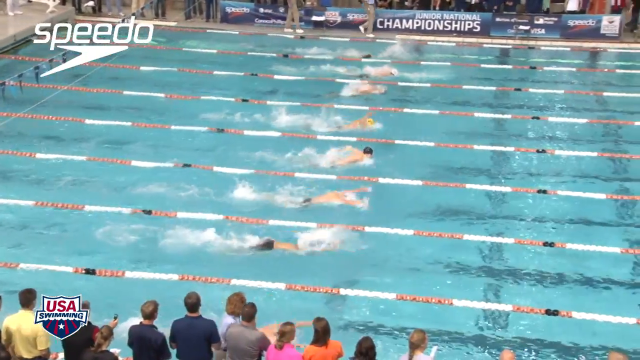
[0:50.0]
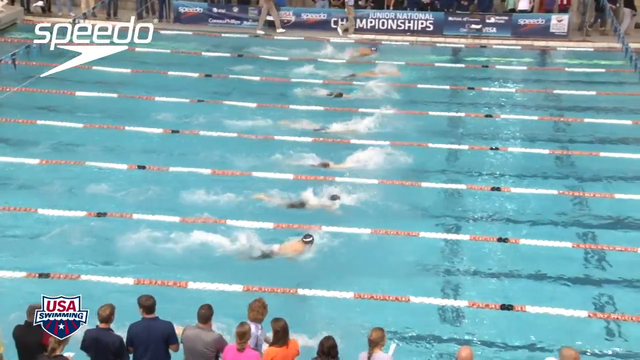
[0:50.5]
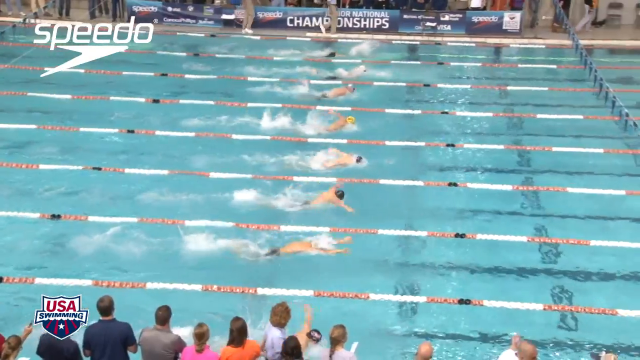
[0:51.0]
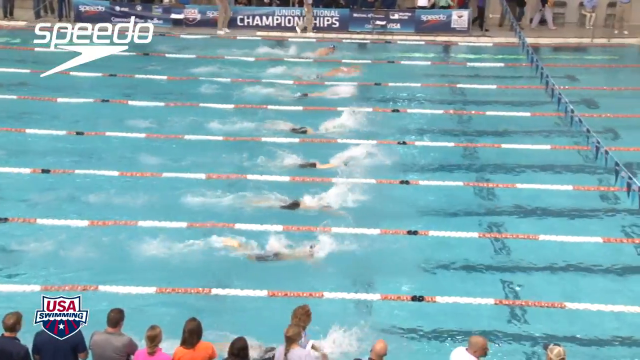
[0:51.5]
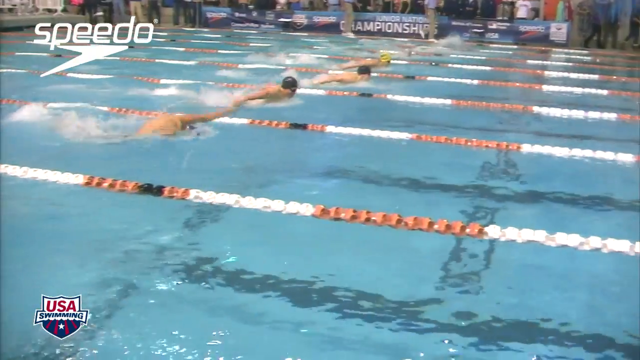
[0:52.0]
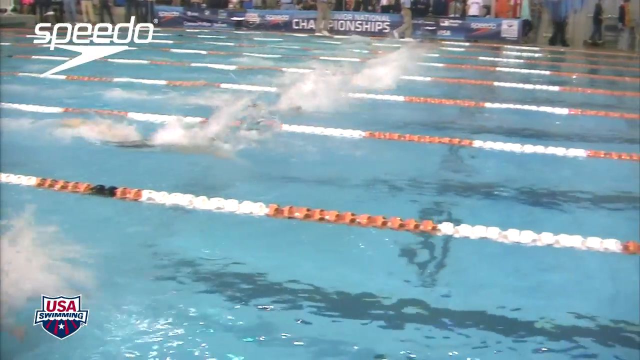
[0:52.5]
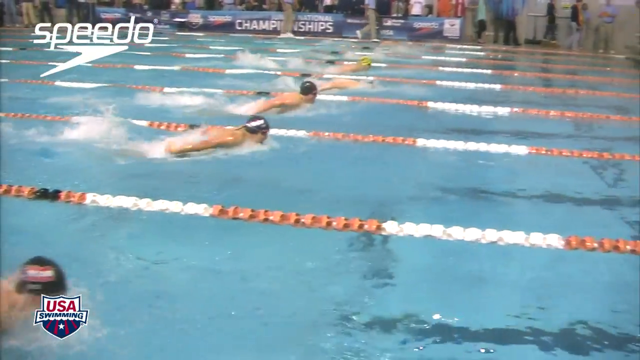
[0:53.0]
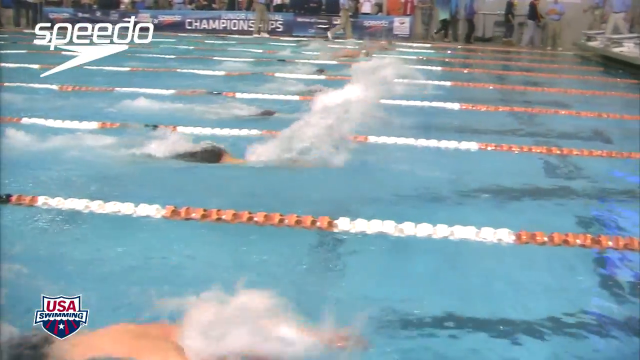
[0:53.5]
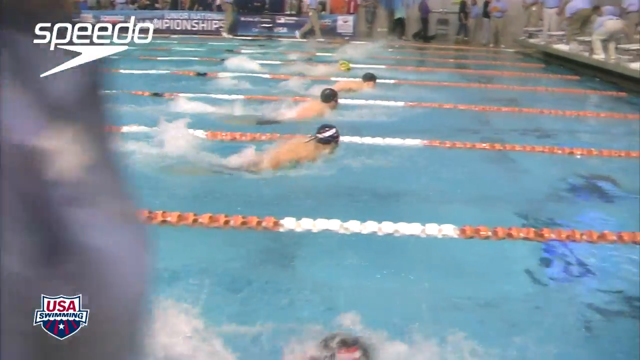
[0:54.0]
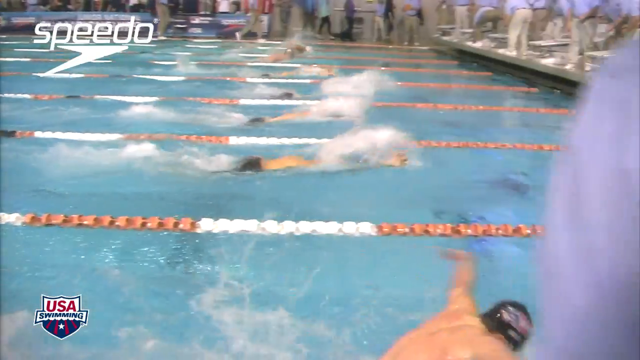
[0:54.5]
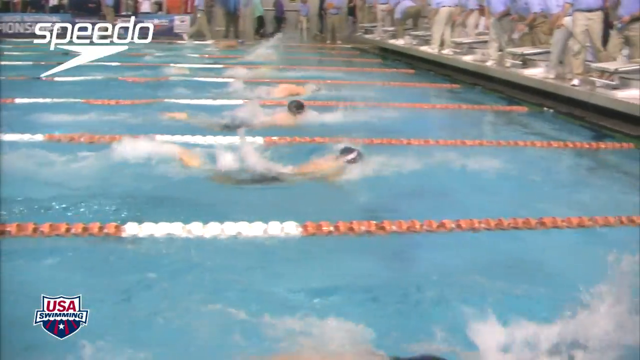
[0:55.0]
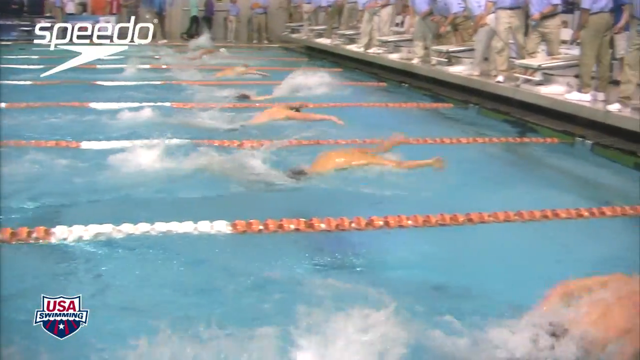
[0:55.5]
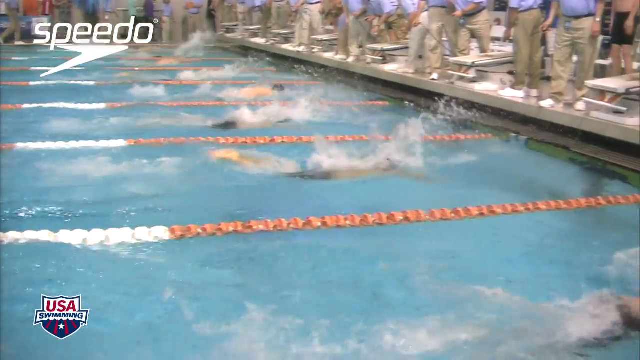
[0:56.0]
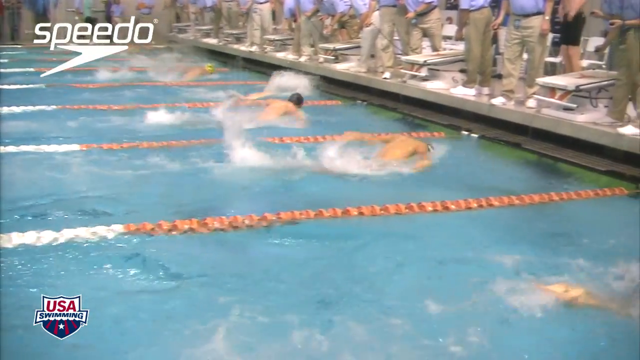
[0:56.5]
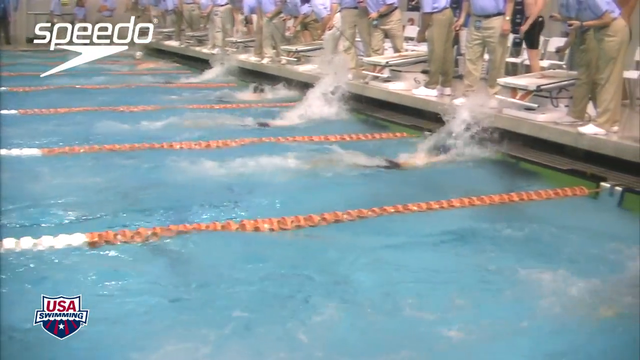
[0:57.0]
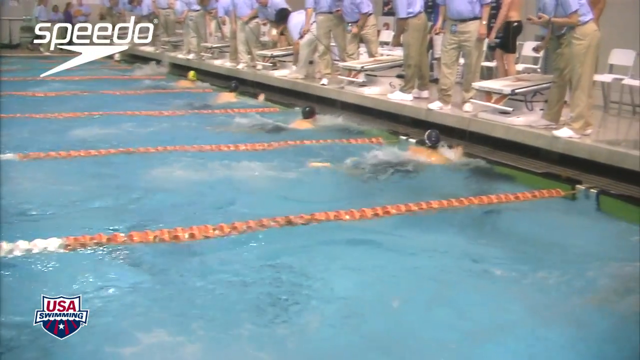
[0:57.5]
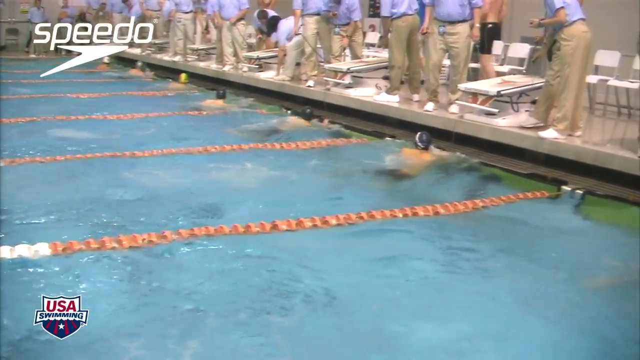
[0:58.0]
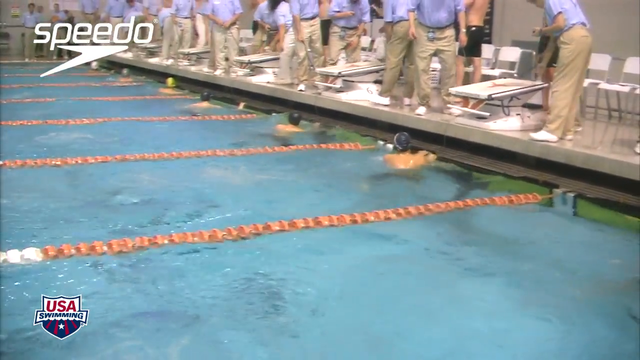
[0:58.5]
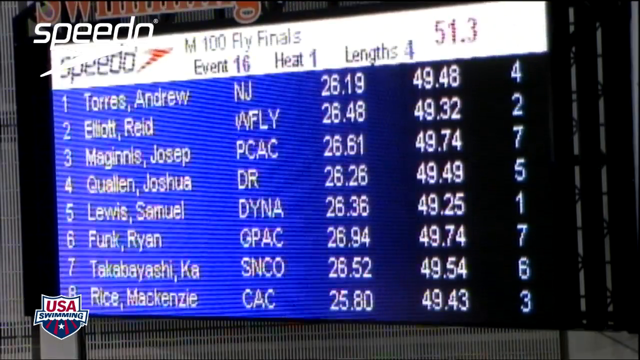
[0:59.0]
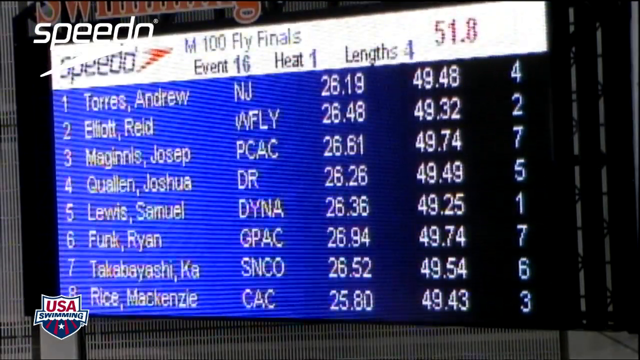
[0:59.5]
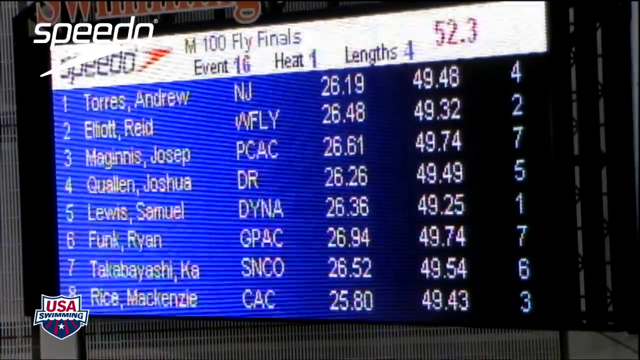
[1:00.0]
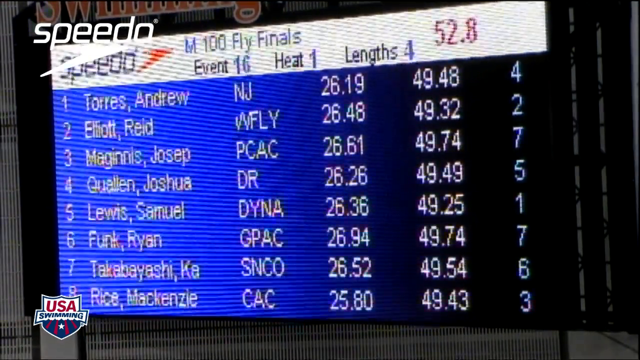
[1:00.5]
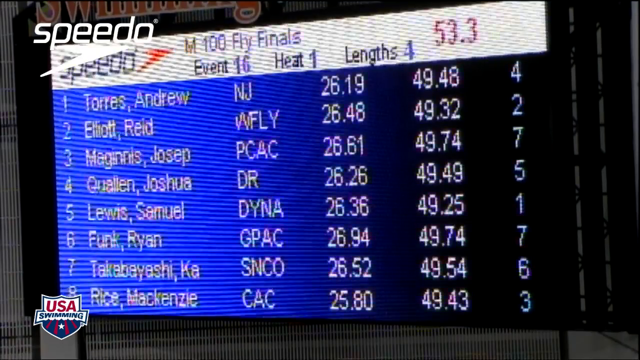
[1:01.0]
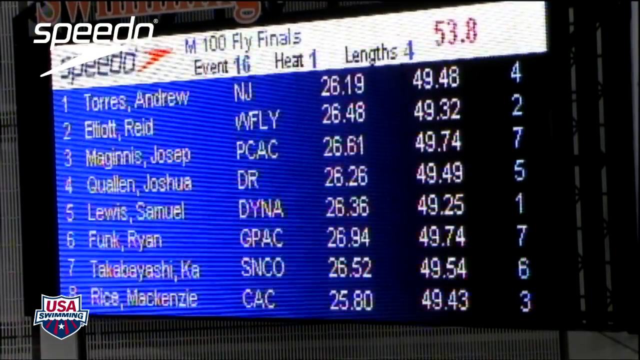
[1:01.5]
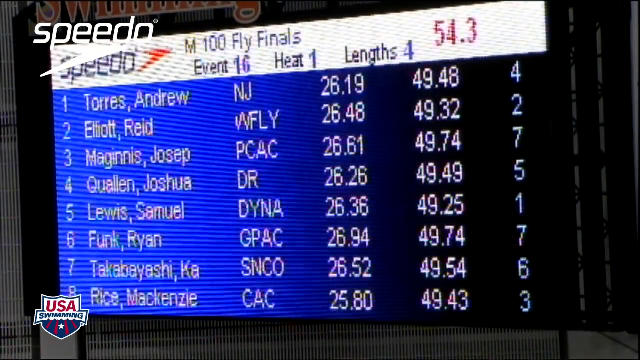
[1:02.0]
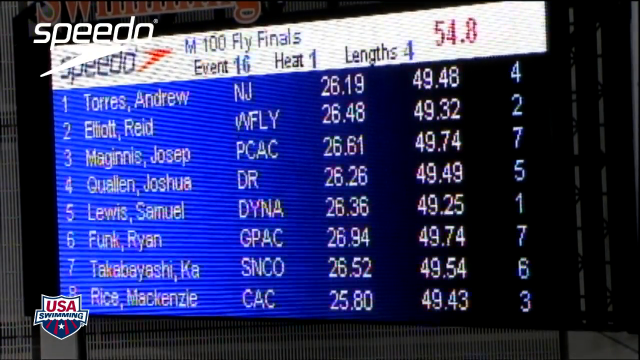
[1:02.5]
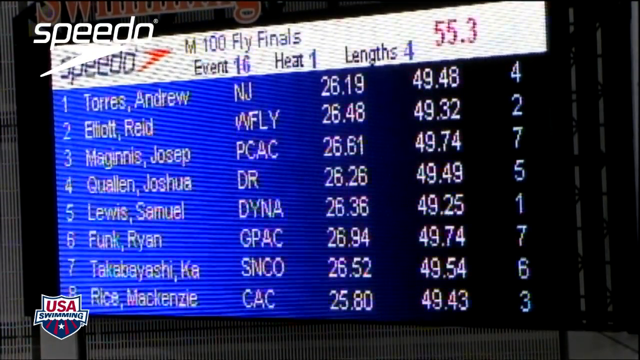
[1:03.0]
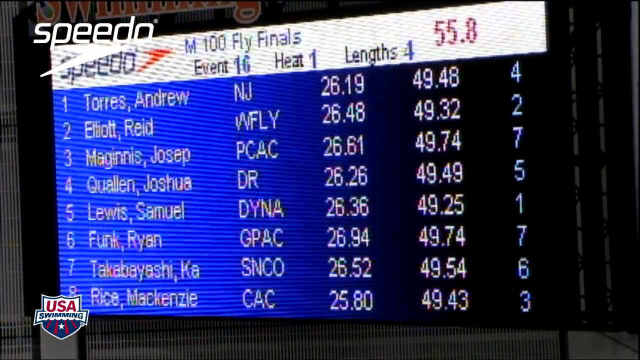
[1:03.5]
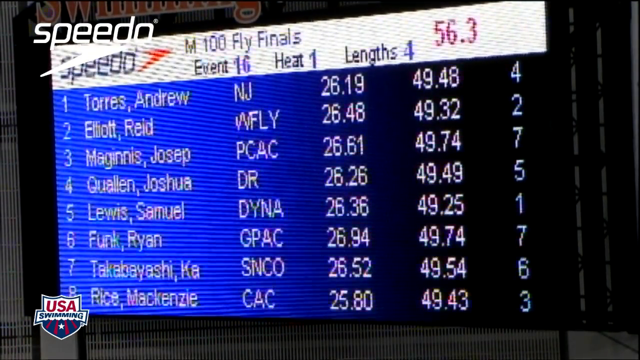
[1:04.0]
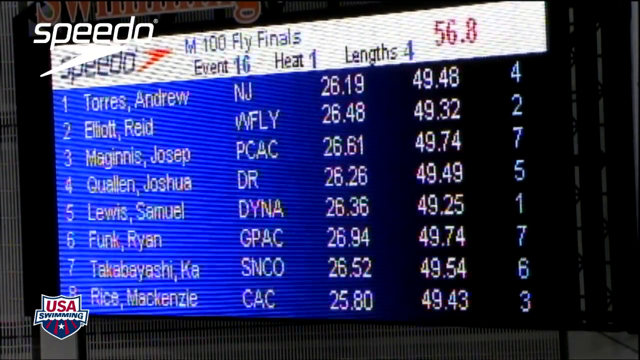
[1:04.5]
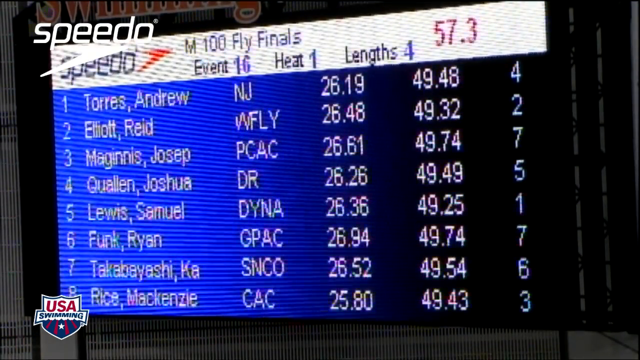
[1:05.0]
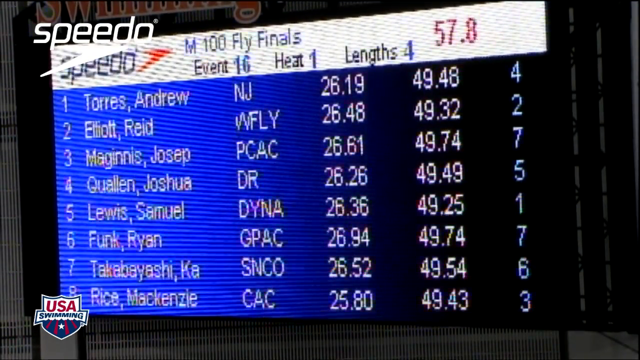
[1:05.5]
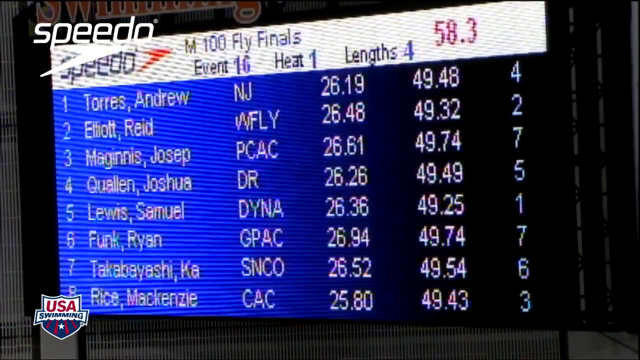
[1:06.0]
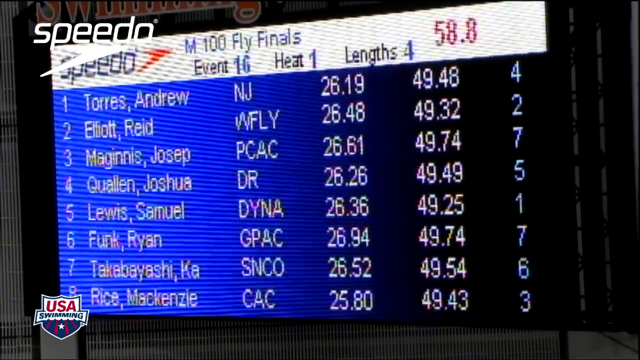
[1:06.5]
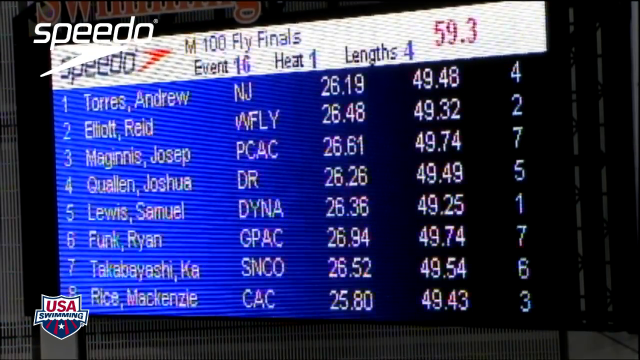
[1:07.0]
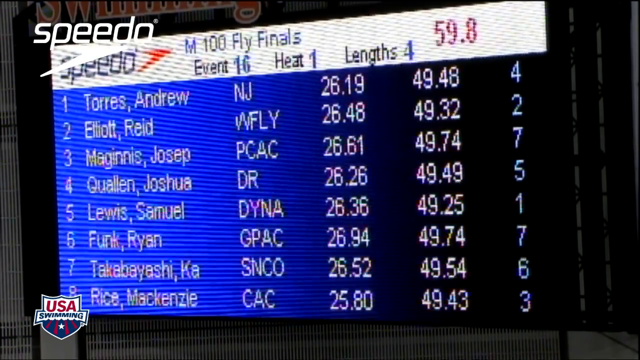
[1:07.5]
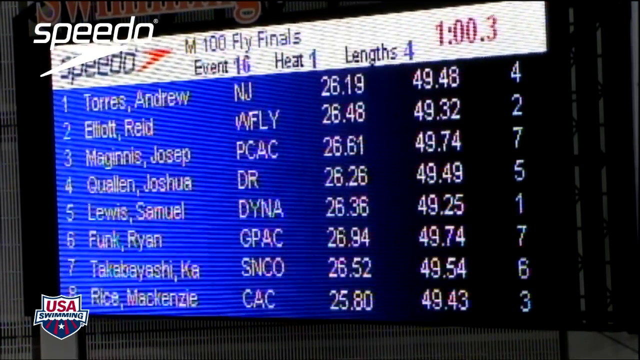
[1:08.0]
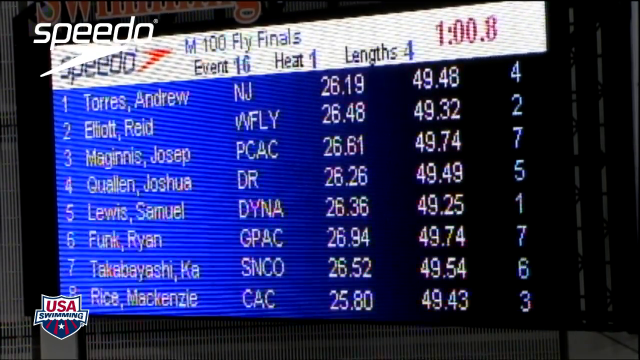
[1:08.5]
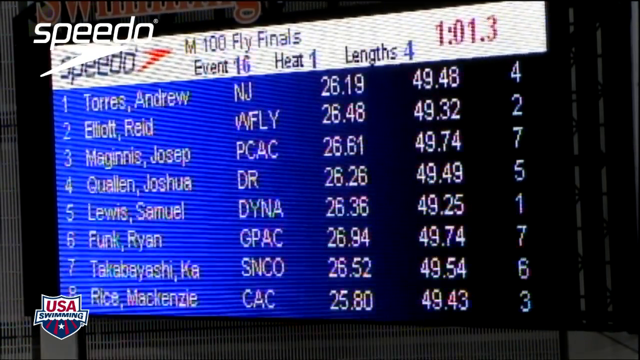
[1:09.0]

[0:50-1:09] The swimmers head back toward their starting area, the water kicking up as they move. At first it looks like some are doing a butterfly stroke and others different strokes, but then they are all doing a butterfly-type stroke as they make it to the other end, their arms popping out of the water like a bird trying to lift off the water. They all wear wet swim caps and goggles, and the straps on the backs of a few people's heads can be made out. In the bottom left corner is a "U.S. Swimming" logo. A lot of people are at the end waiting for the swimmers to come out of the pool. A scoreboard shows "heat" and "event", a timer in the corner counts up past one minute, and the participants are listed, numbered one through eight.